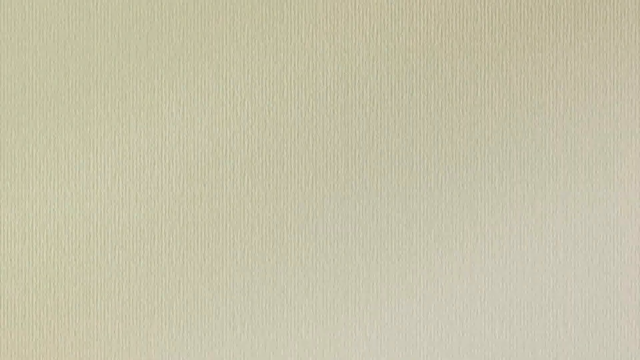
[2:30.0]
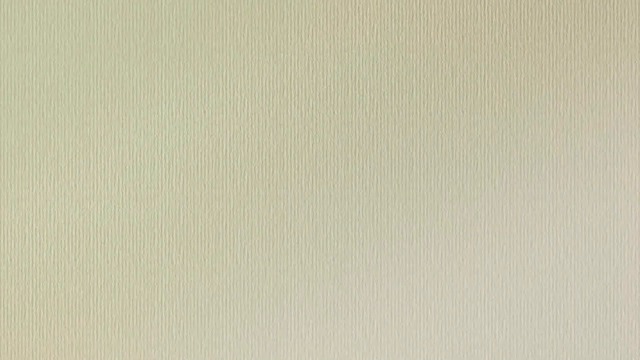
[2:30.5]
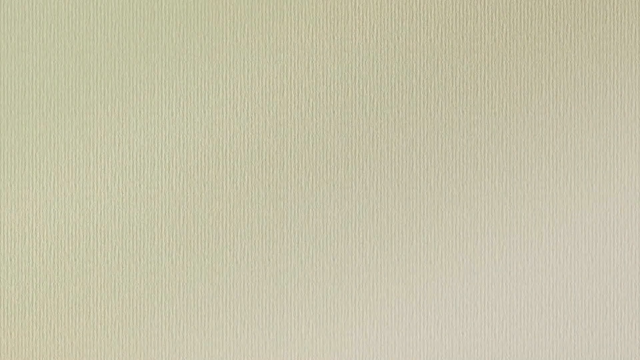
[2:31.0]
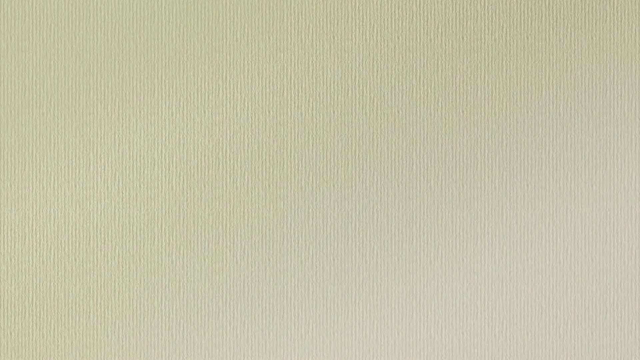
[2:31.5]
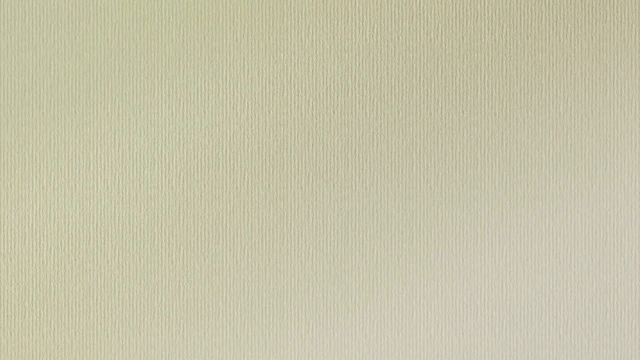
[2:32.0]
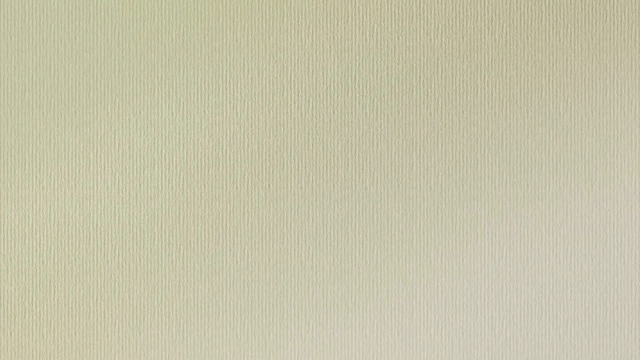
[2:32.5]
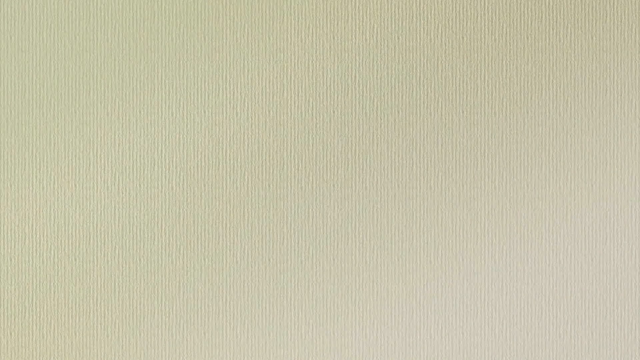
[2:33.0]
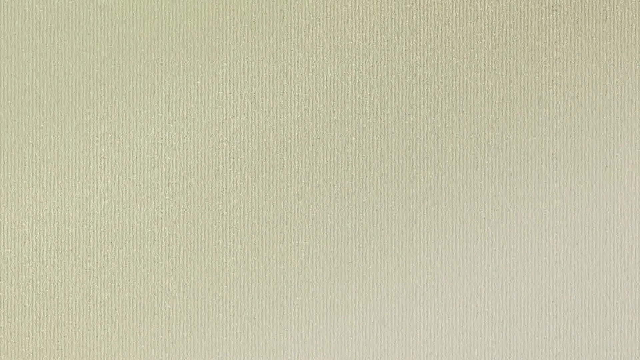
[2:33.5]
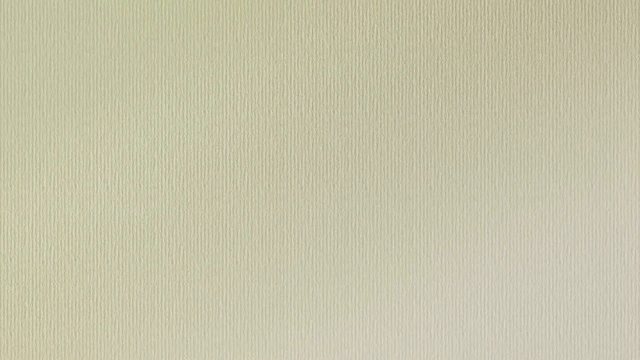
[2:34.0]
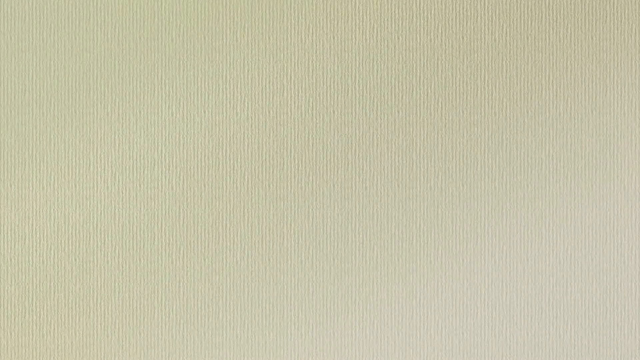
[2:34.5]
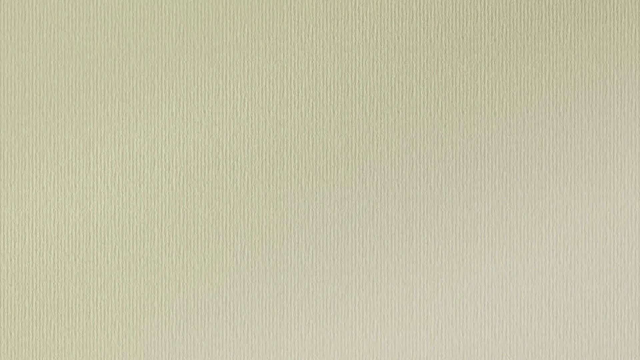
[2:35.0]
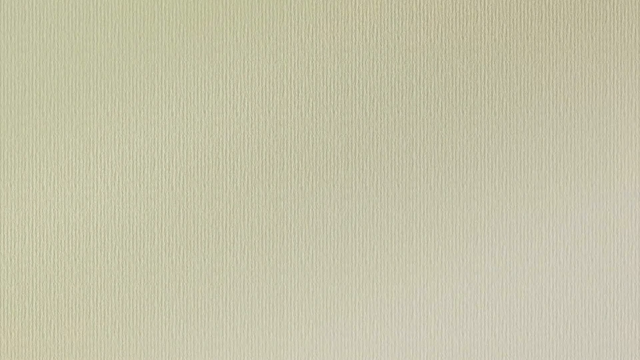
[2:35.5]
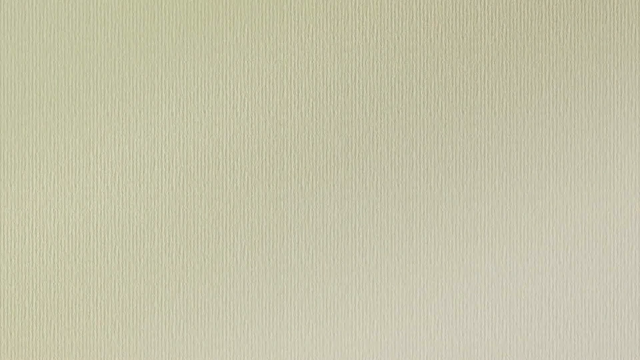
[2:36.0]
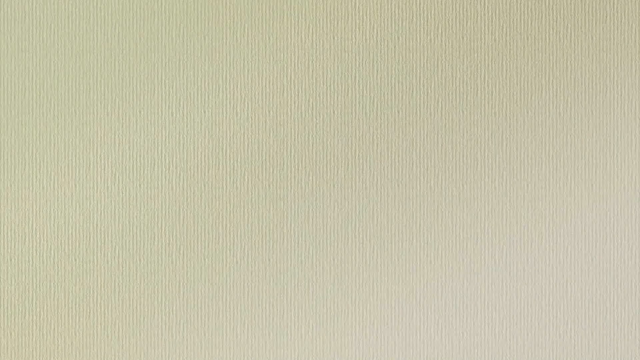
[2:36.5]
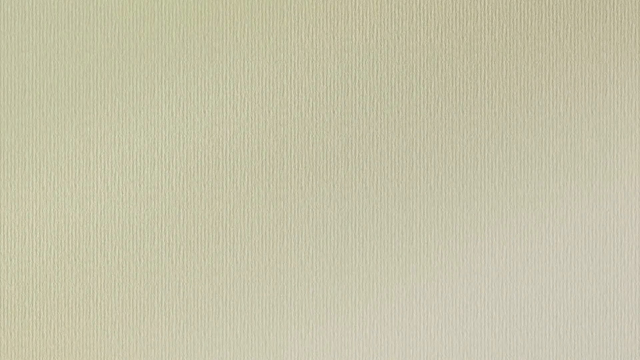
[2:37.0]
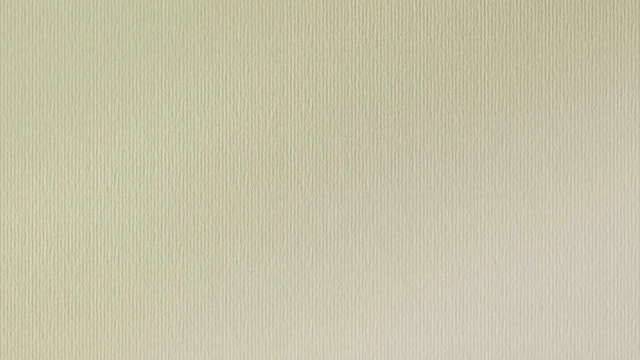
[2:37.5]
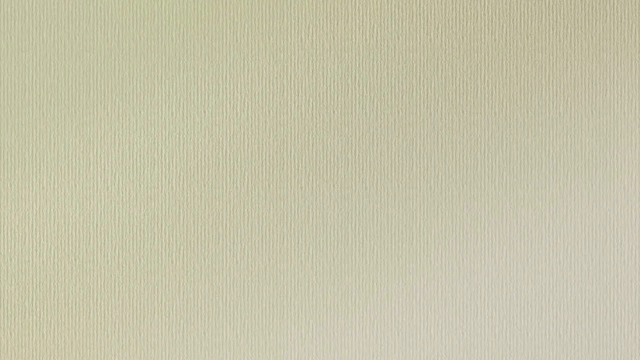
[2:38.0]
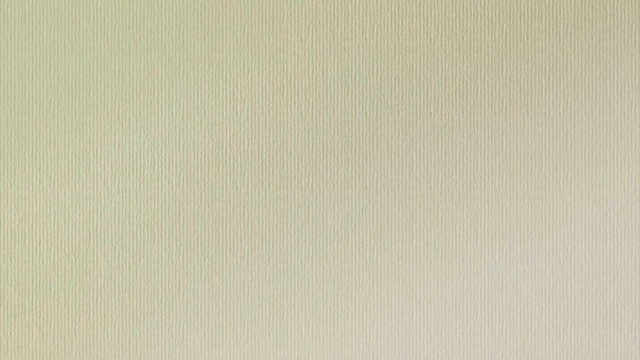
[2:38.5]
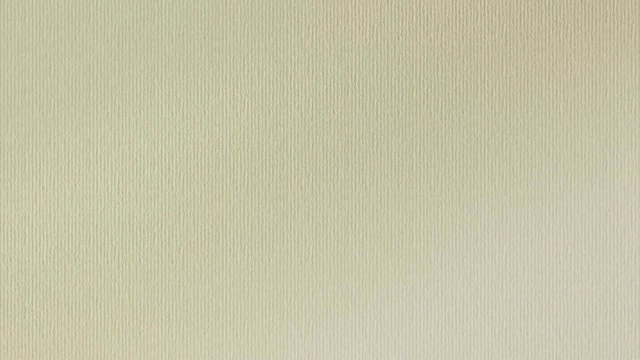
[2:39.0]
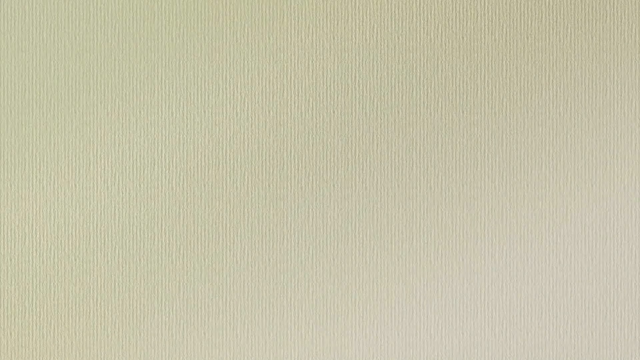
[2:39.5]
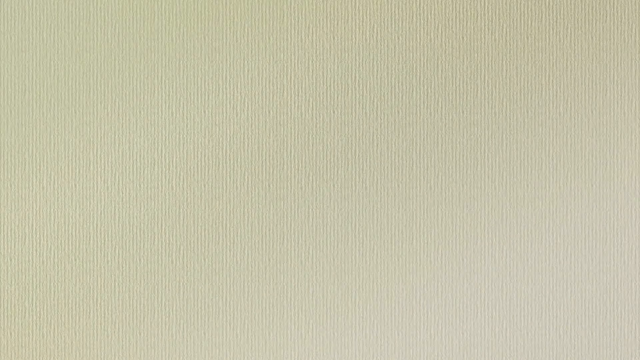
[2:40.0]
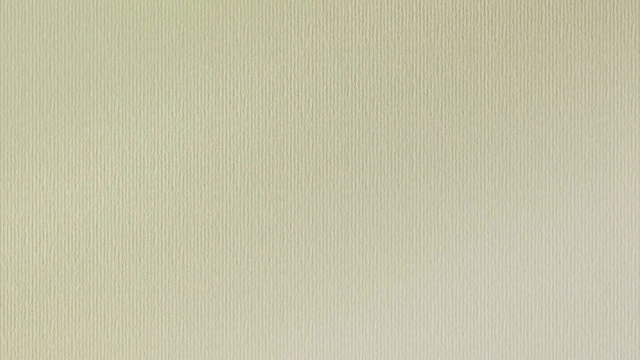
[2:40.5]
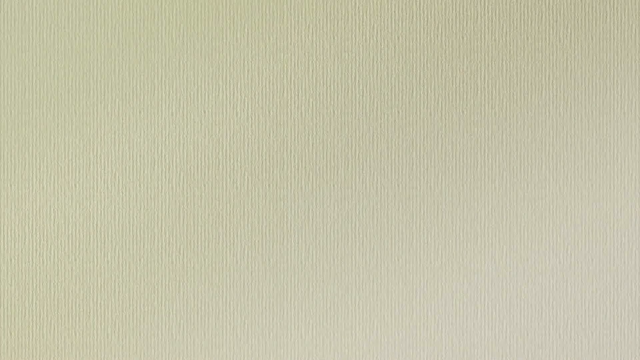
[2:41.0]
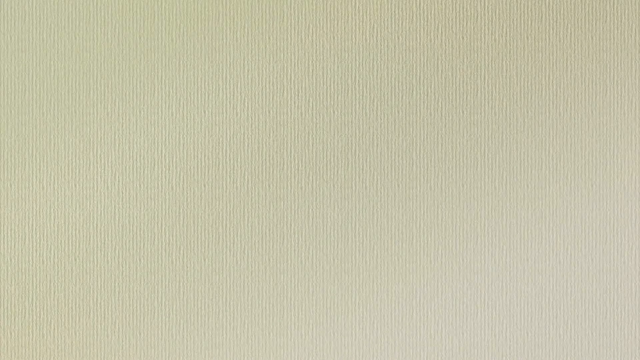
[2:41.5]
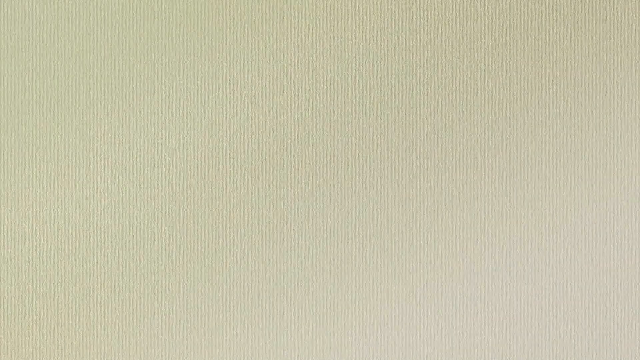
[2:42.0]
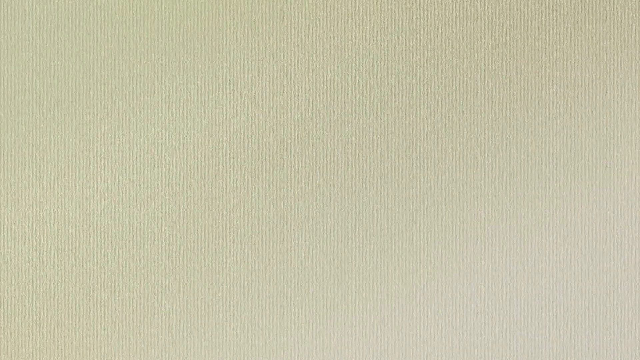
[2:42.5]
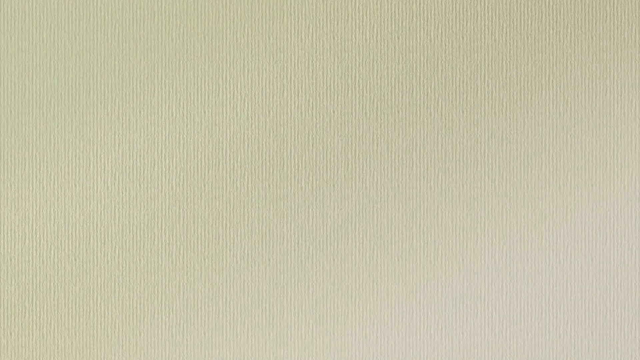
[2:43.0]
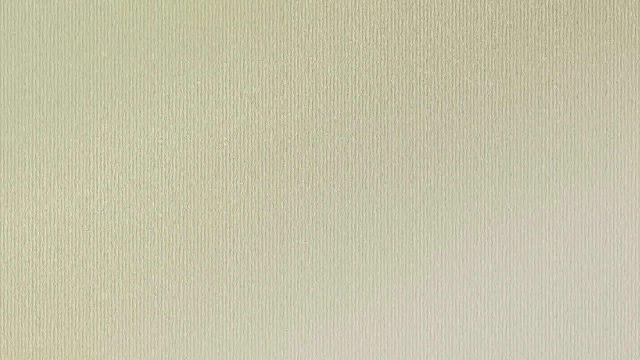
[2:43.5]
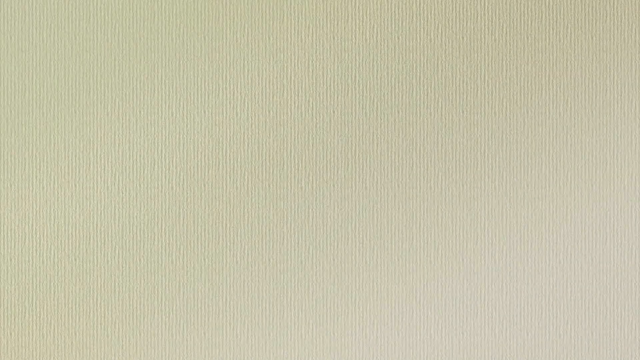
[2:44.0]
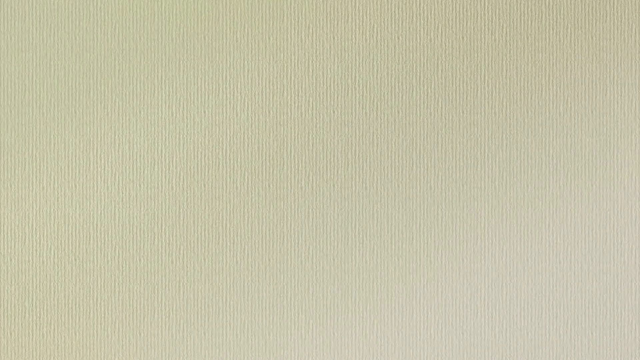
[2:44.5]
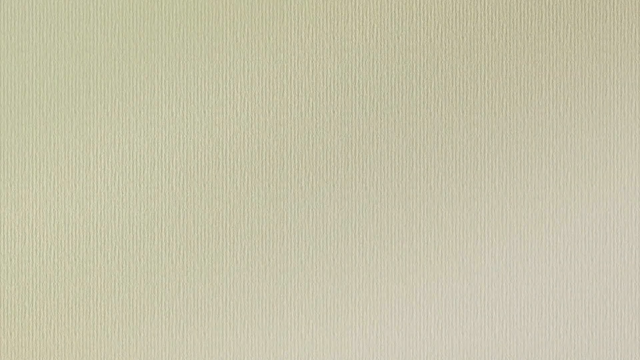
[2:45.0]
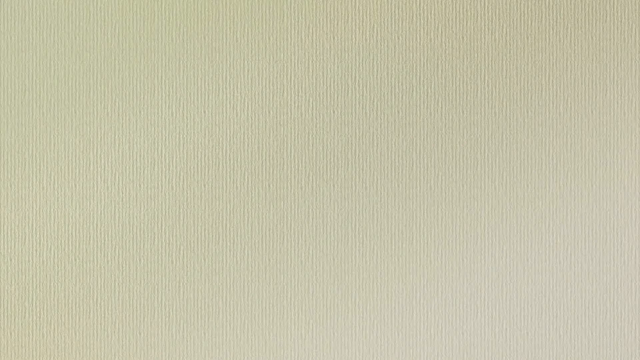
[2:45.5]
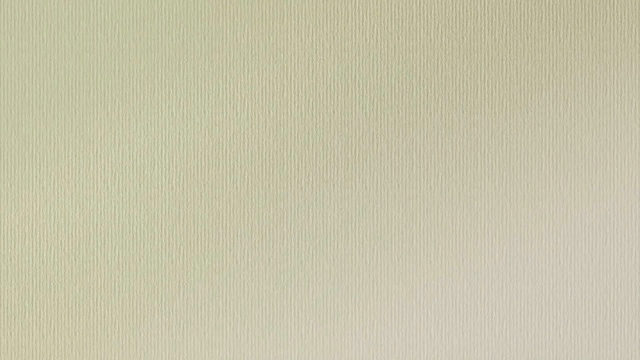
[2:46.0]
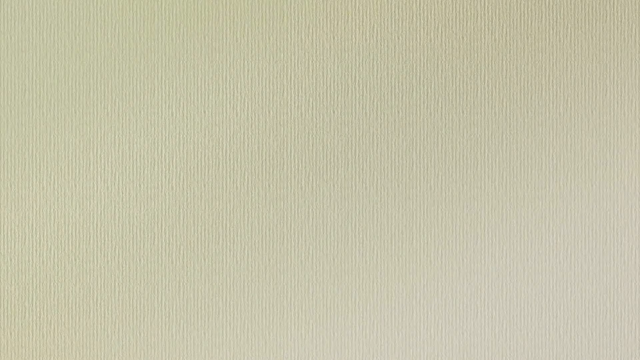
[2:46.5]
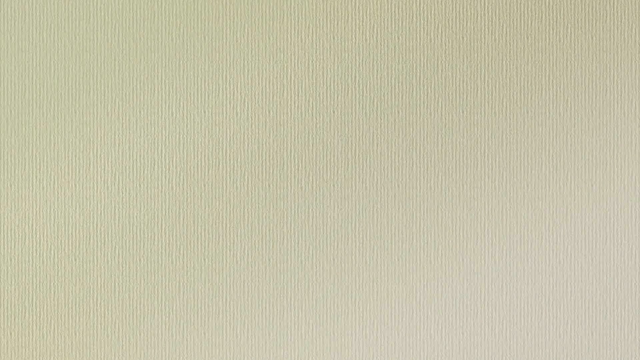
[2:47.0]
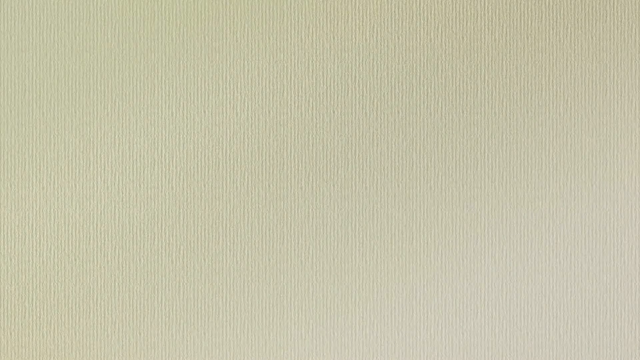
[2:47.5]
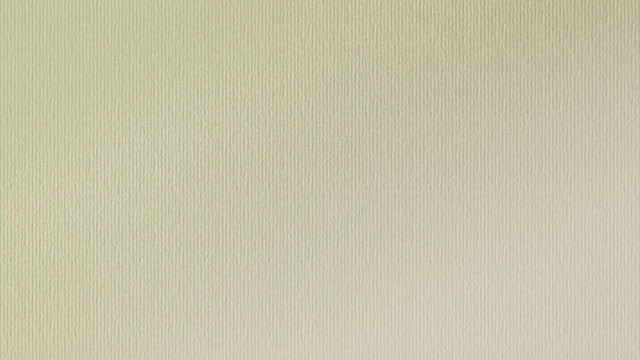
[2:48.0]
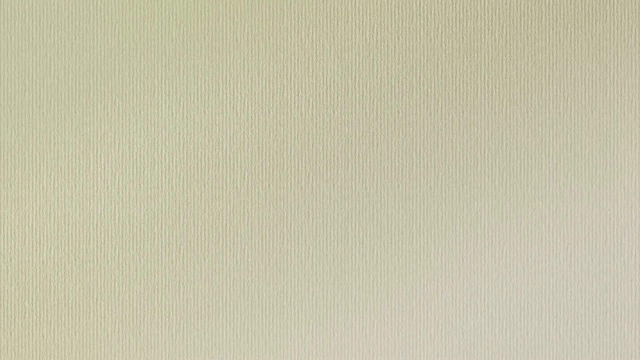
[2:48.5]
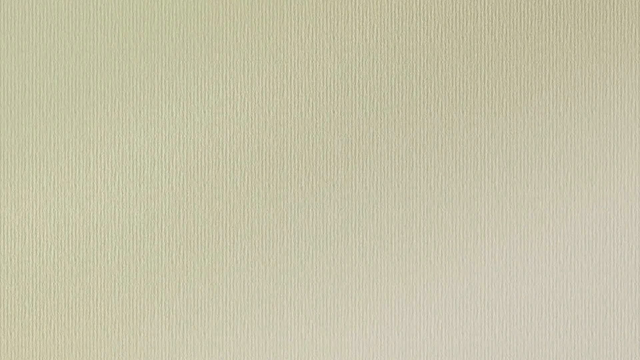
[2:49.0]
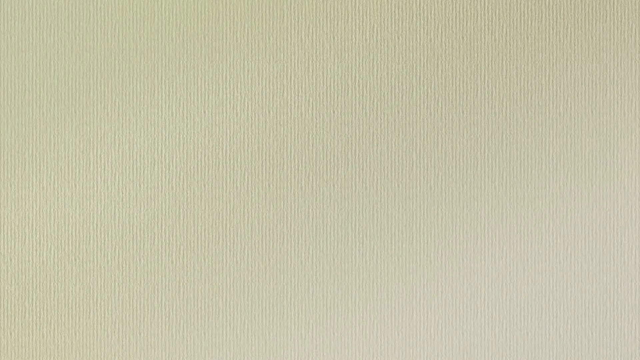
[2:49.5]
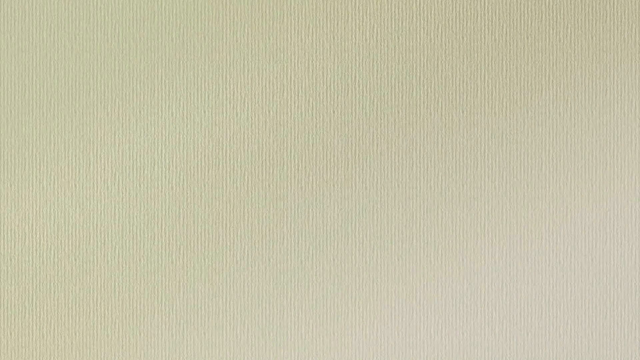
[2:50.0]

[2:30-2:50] The video shows just a gray background. The text under "hydropower" reads "power is generated by harnessing the energy of falling water," then "the greater the difference in water level, the more energy," then "hydropower is a good alternative energy source because it is essentially unlimited." Below that is "Outlook for hydropower" and "The Outlook is generally good for hydropower, although there are a few drawbacks," followed by "dams prevent the migration of fish" and a line about sedimentation behind the dam. To the right is a square with a white background, "common hydroelectric system" at its top right, and a diagram of how it works.